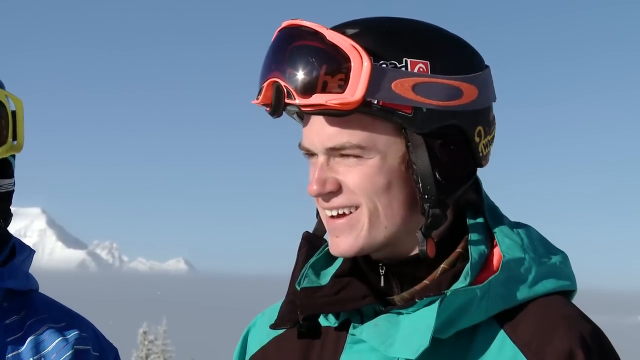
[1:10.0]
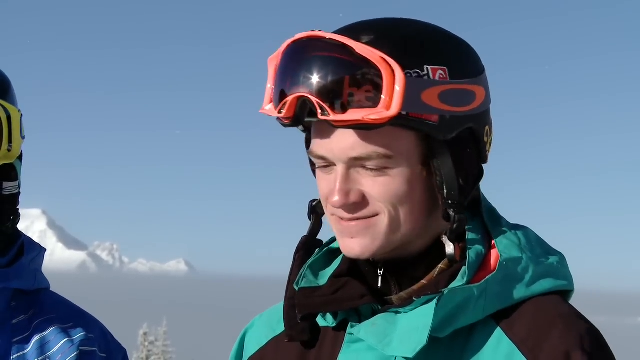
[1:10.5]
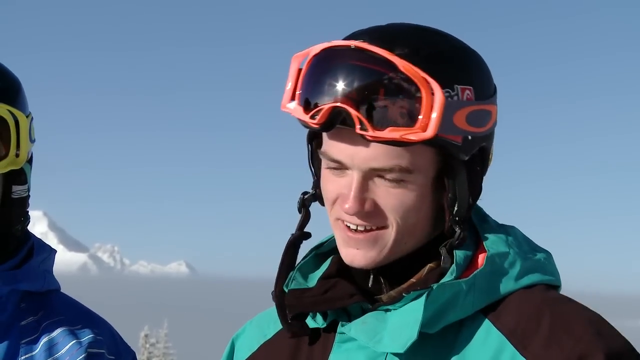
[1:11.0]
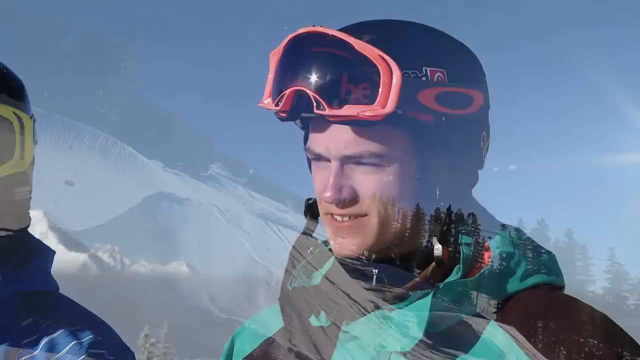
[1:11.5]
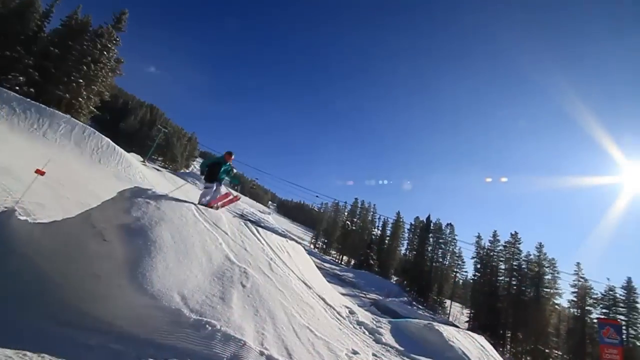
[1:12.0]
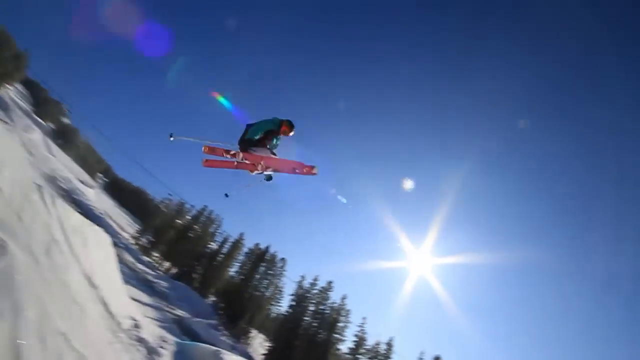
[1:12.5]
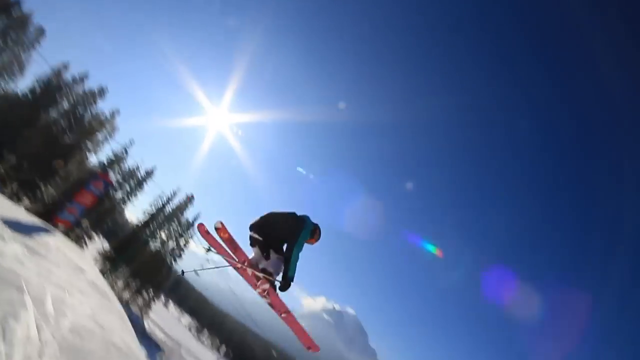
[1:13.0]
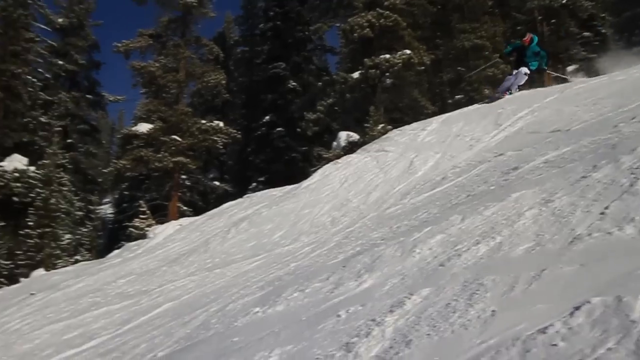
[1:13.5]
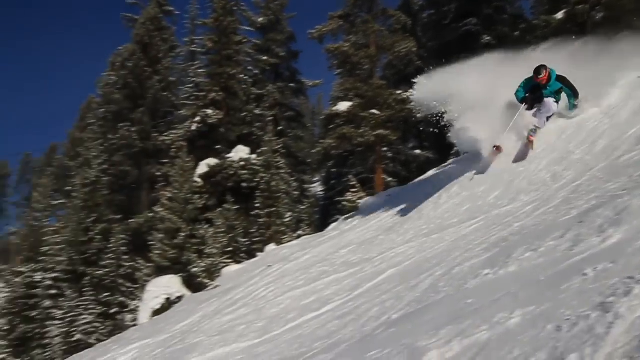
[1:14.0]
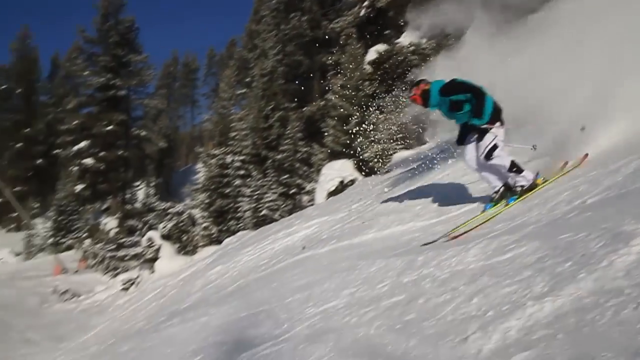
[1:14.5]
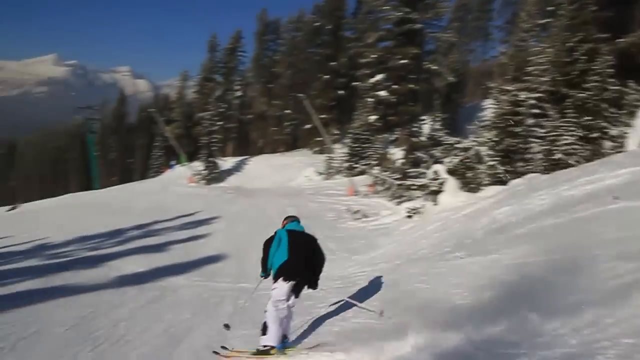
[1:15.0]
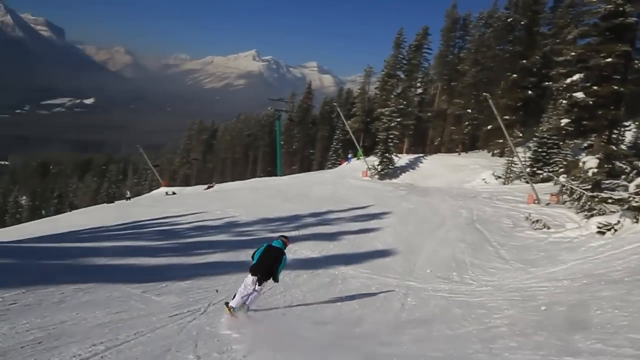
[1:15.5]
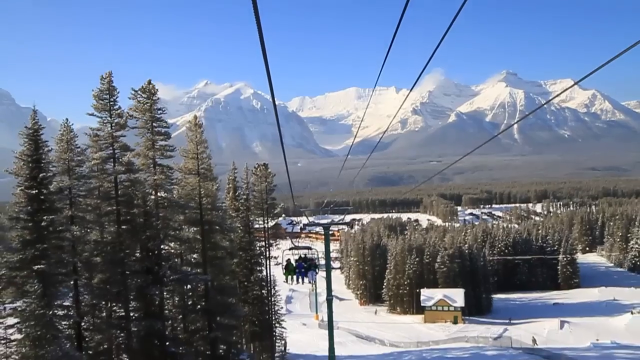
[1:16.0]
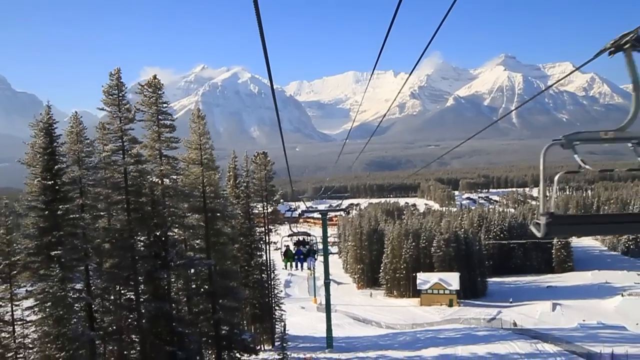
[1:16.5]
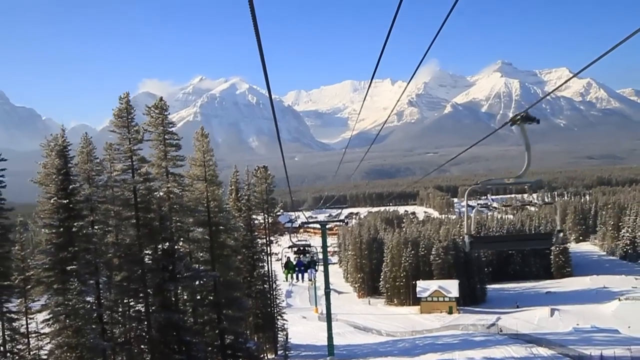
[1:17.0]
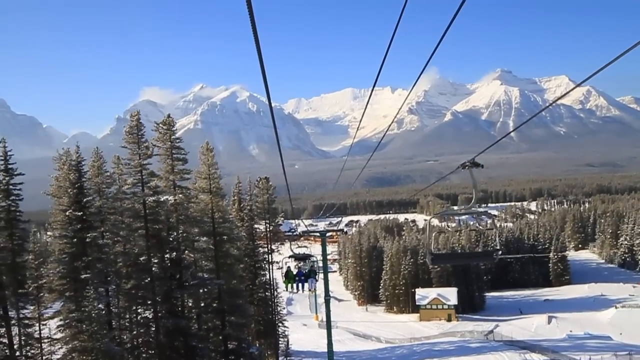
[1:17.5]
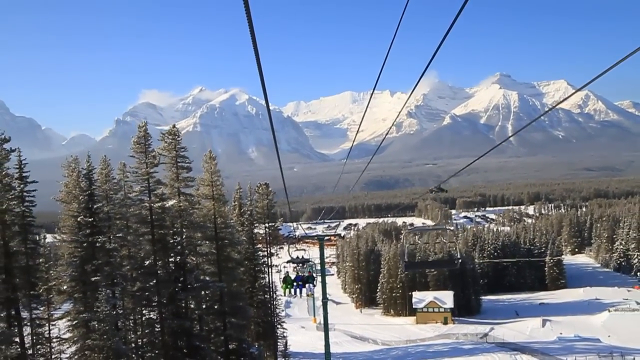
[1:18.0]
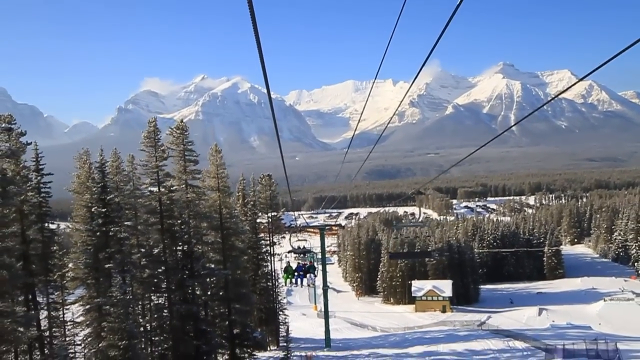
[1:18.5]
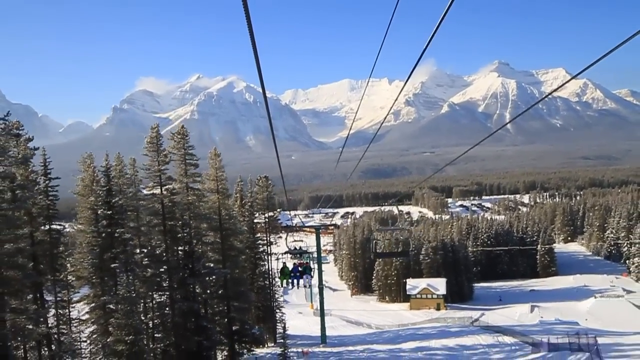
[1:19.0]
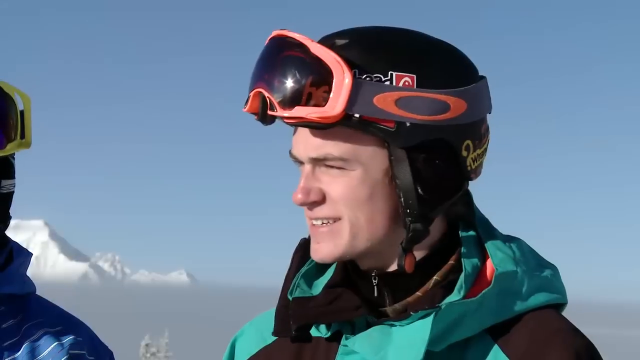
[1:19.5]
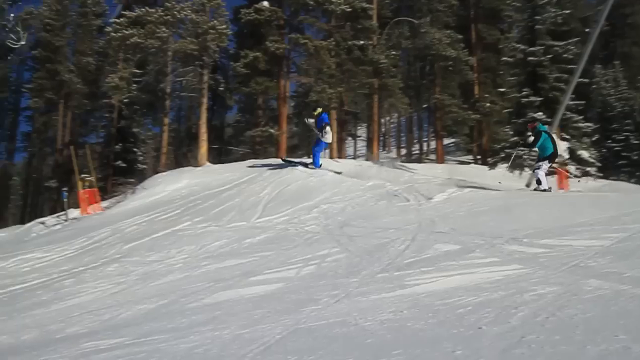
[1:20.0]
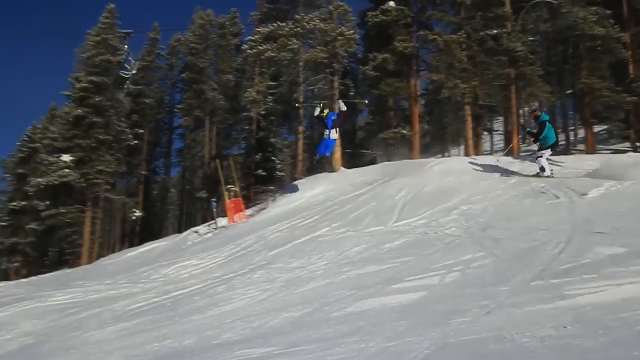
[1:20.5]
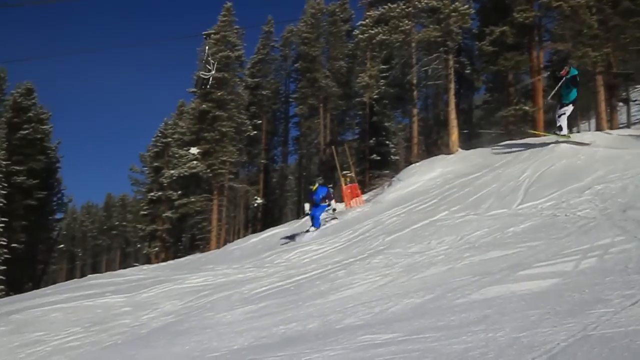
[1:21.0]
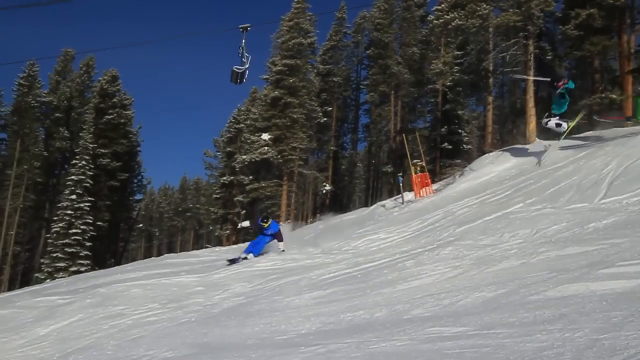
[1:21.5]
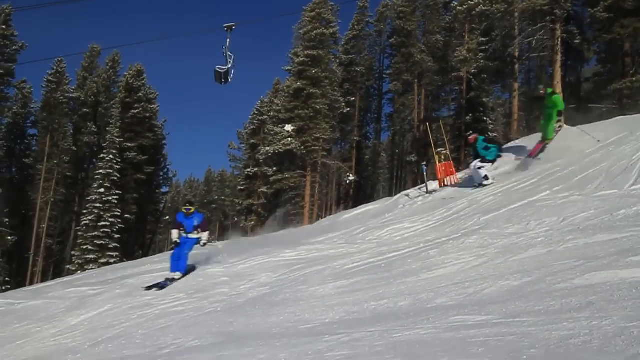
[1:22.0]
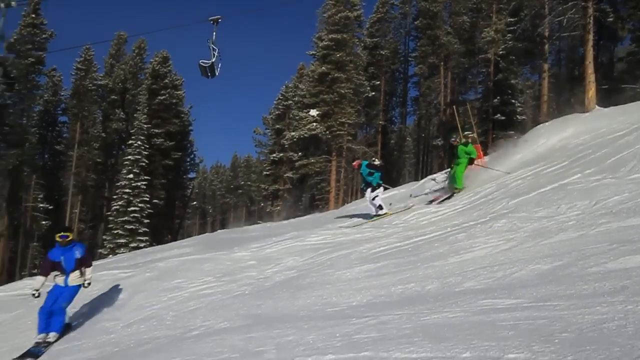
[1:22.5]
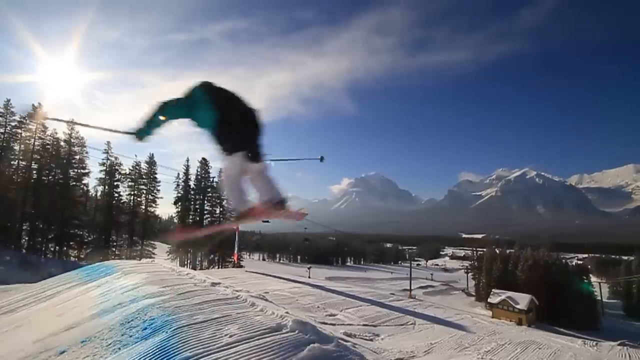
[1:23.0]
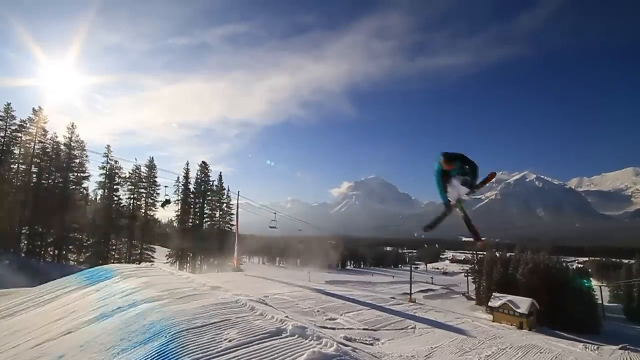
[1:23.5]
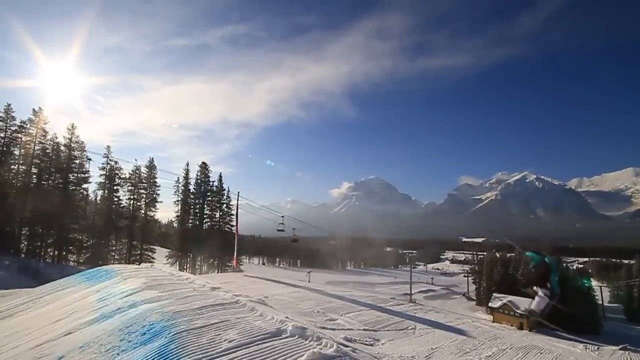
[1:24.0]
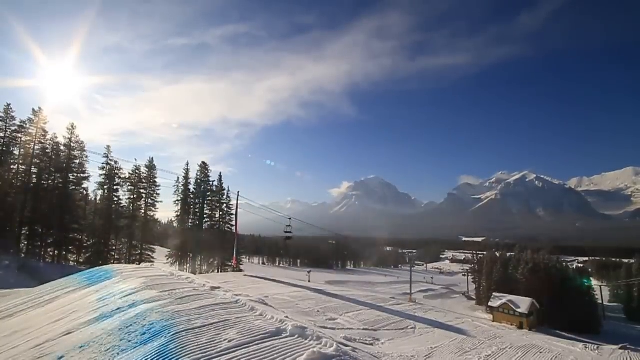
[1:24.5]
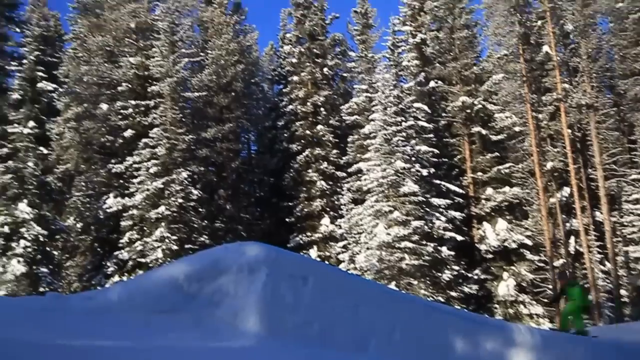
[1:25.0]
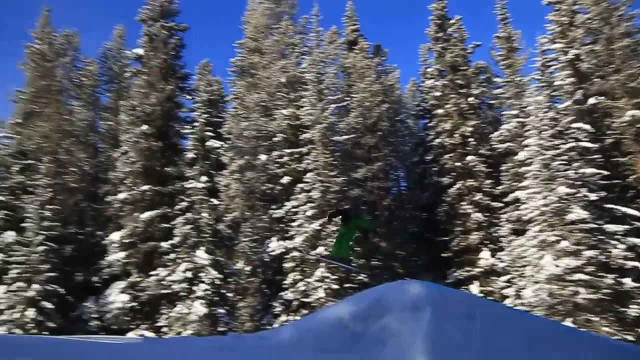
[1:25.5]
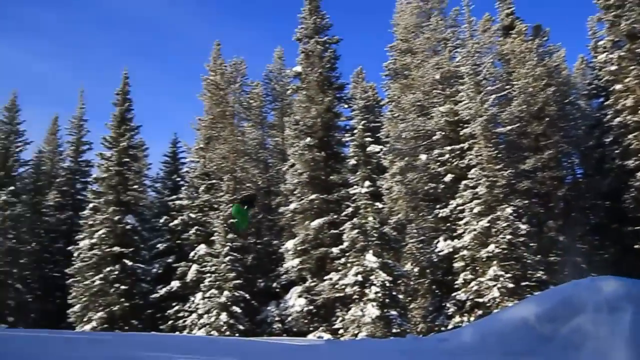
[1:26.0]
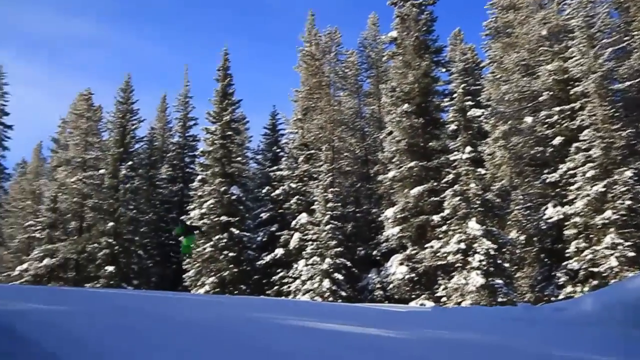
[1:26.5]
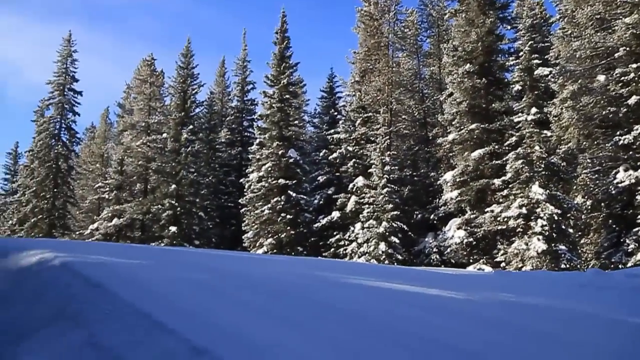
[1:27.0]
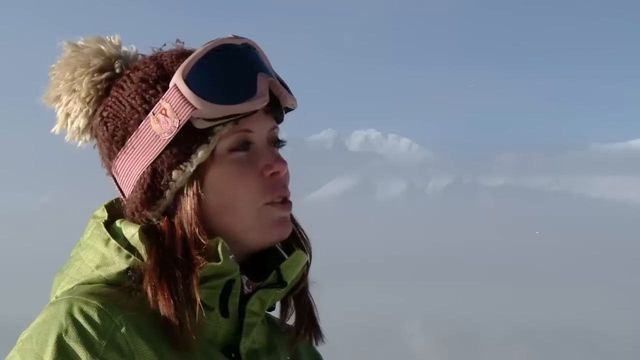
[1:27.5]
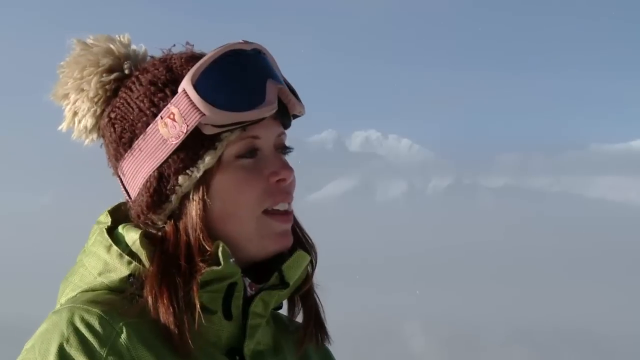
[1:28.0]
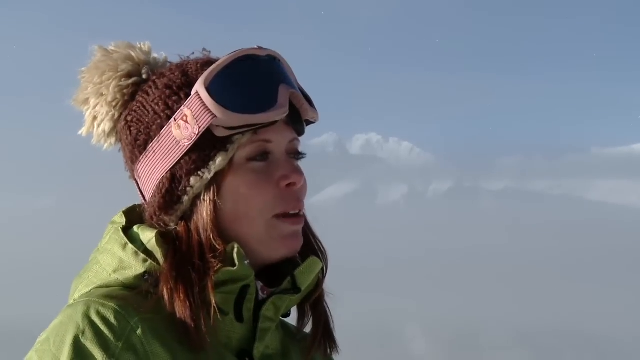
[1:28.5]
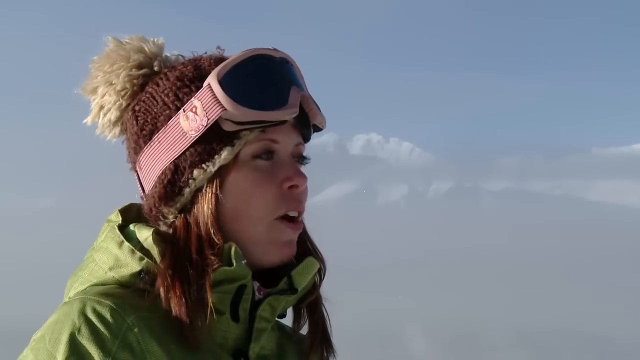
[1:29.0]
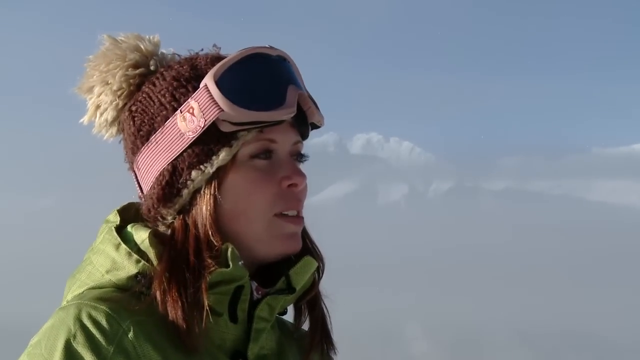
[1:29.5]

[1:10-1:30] The kid in the gray and black jacket, wearing grayish ski goggles, is on the right-hand side talking, with the kid in blue on the left. The kid in the gray and black jacket goes down the ski hills doing tricks. The video cuts to a ski lift with the mountain range in the background under baby blue skies, and the kids do tricks off little bunny hills on the way down. It cuts to the woman on the left-hand side talking to the kids. It seems to be a promotional video for the ski resort or resorts.